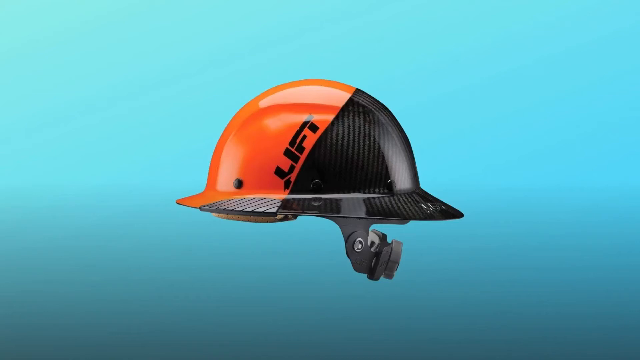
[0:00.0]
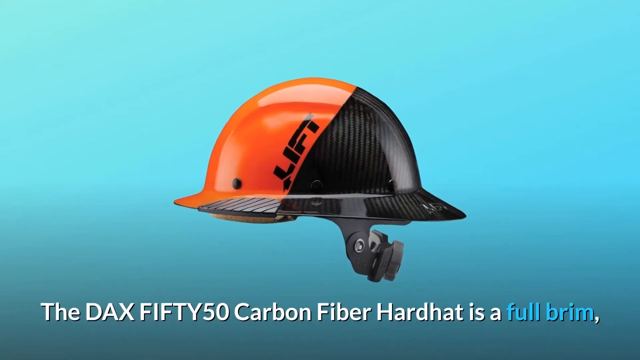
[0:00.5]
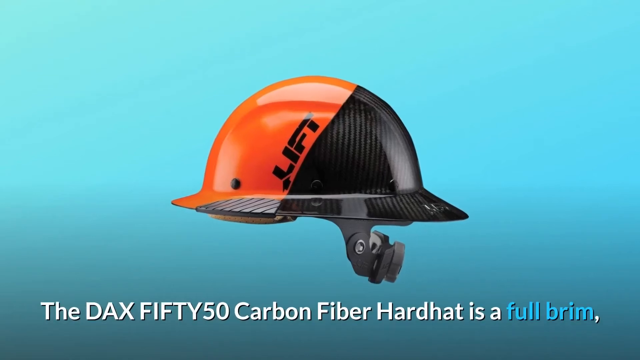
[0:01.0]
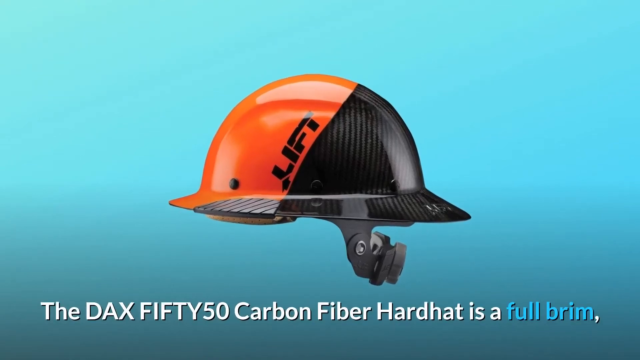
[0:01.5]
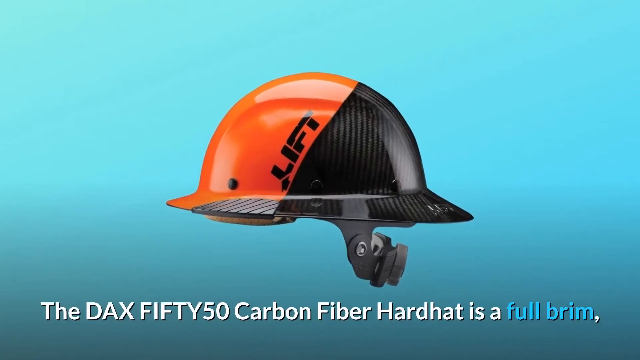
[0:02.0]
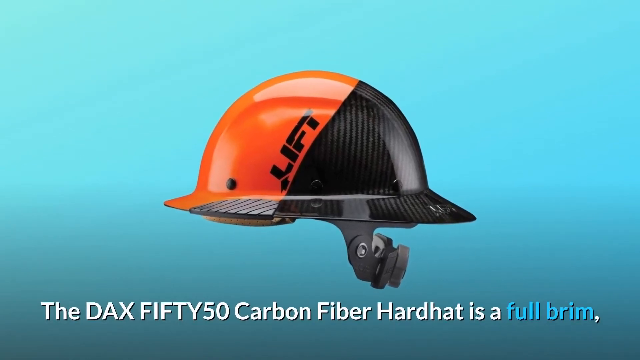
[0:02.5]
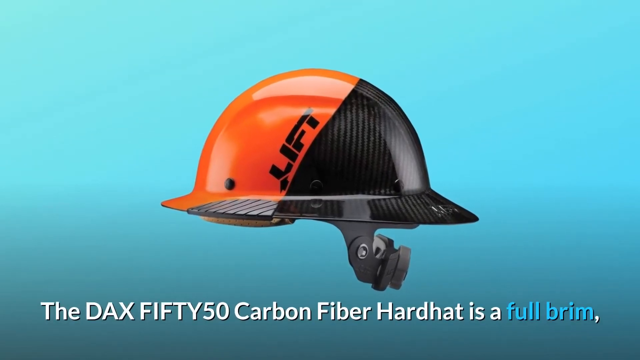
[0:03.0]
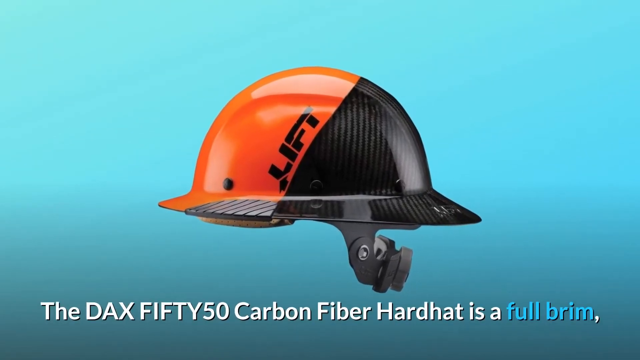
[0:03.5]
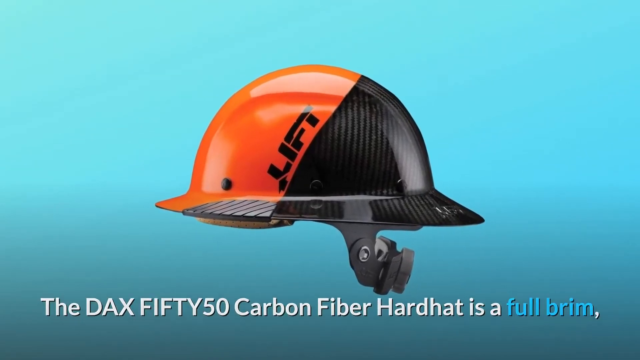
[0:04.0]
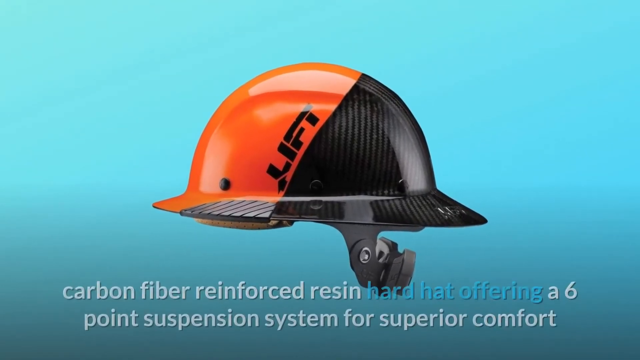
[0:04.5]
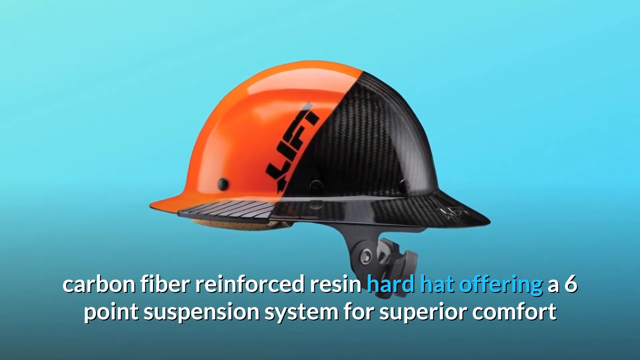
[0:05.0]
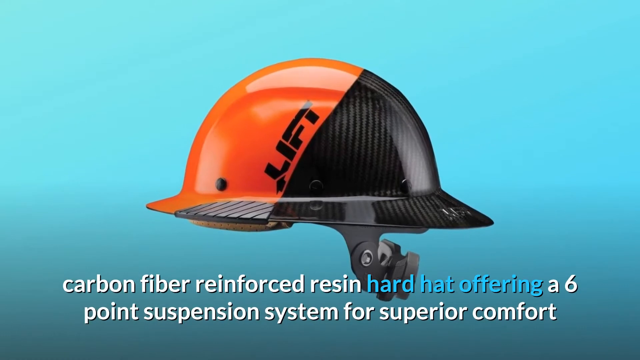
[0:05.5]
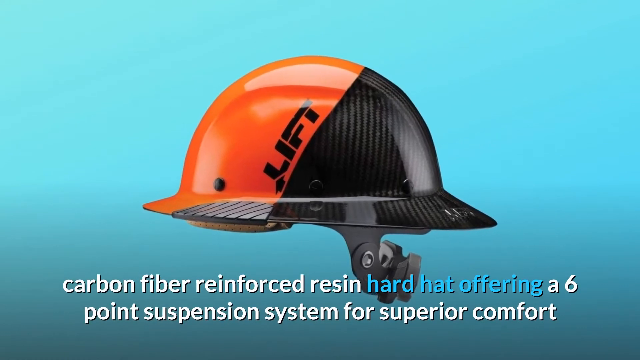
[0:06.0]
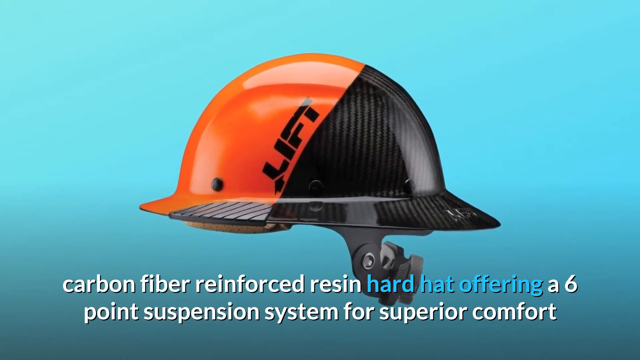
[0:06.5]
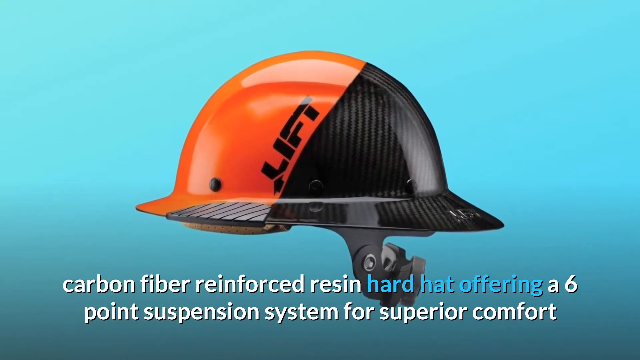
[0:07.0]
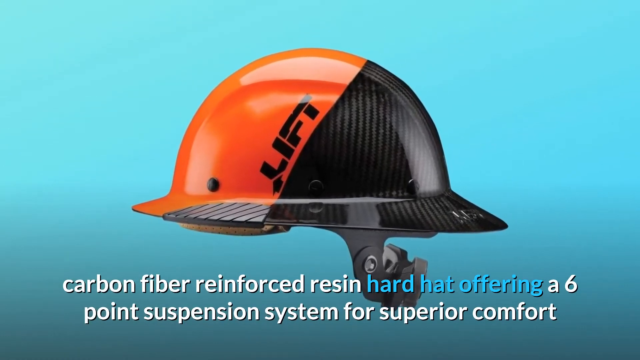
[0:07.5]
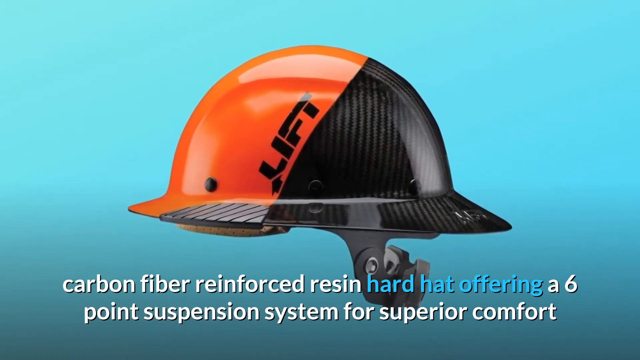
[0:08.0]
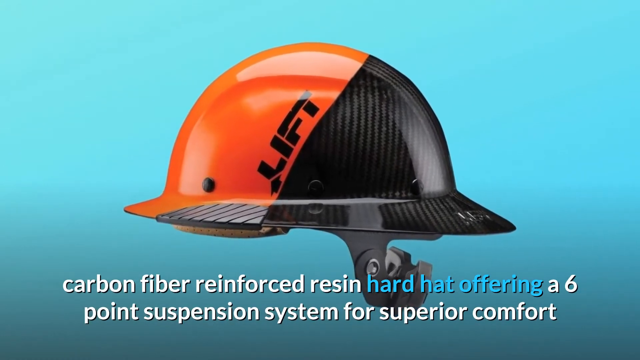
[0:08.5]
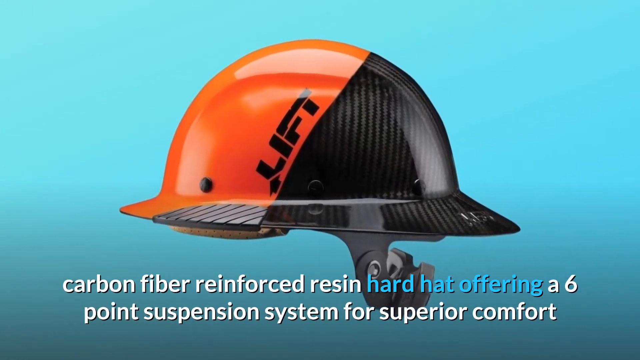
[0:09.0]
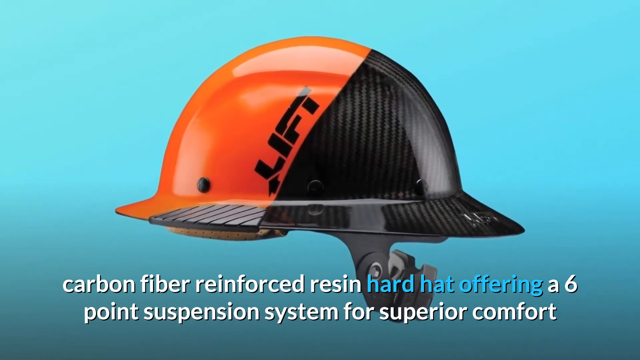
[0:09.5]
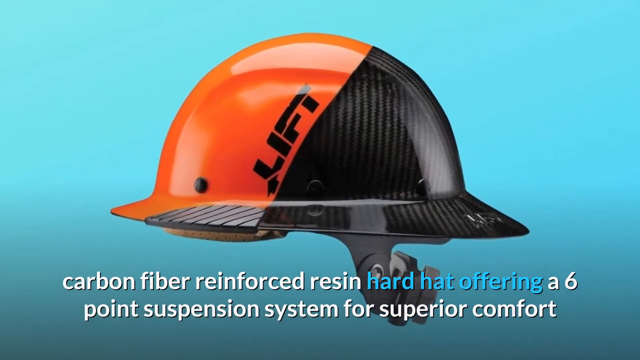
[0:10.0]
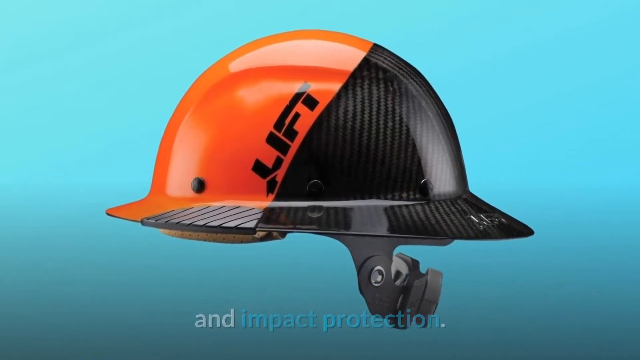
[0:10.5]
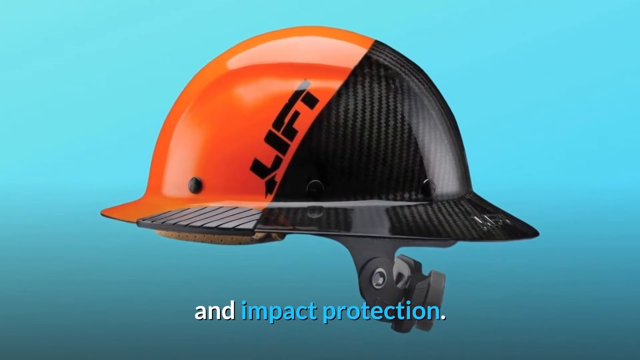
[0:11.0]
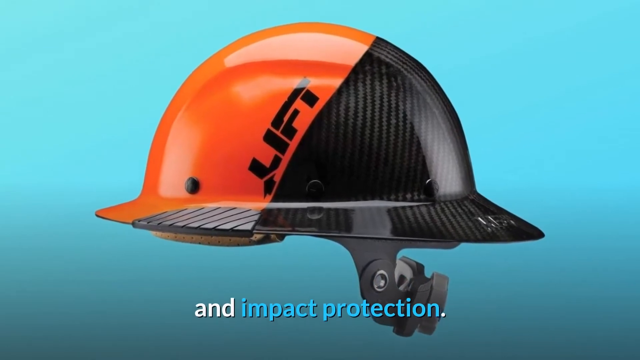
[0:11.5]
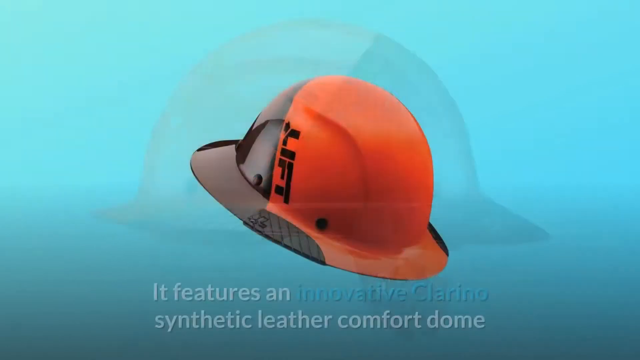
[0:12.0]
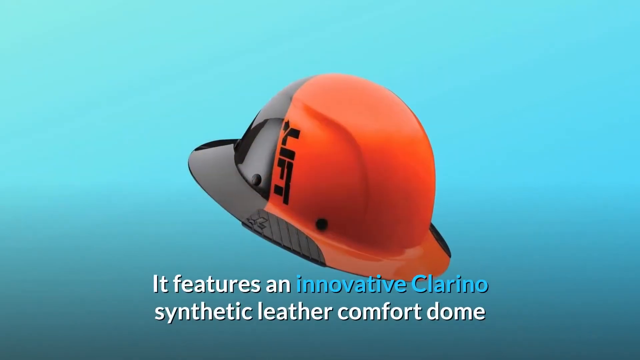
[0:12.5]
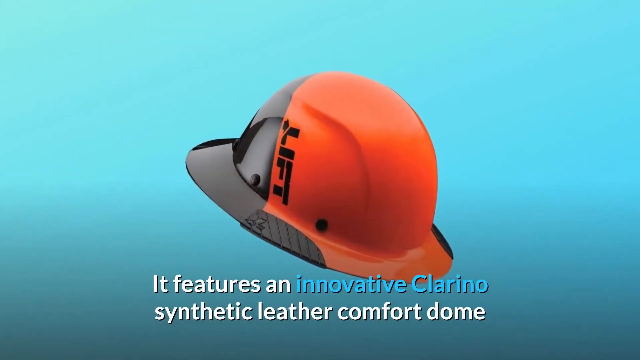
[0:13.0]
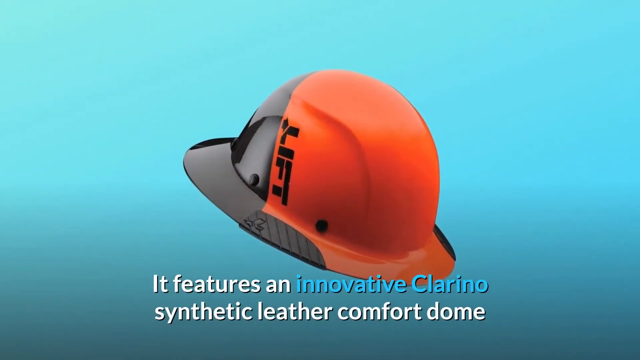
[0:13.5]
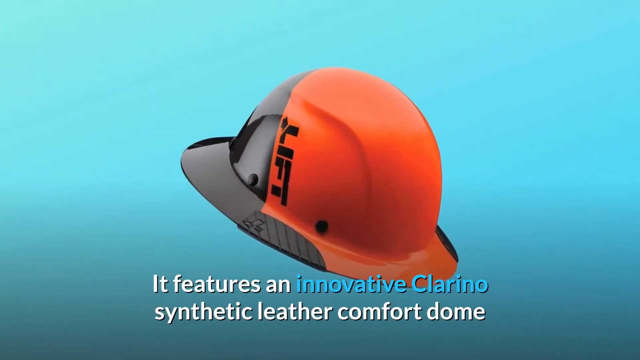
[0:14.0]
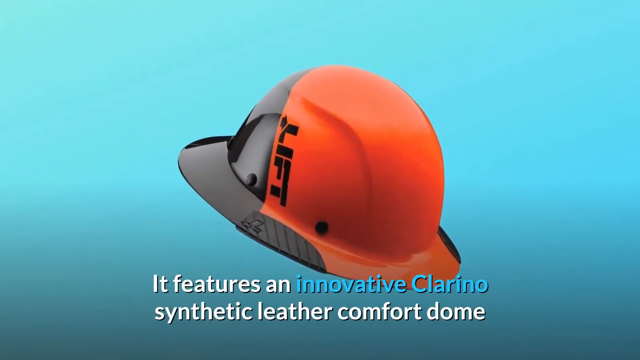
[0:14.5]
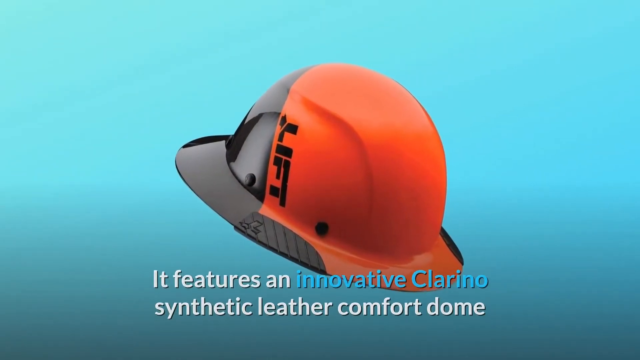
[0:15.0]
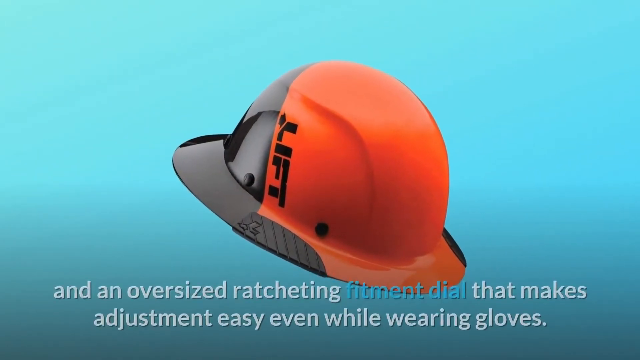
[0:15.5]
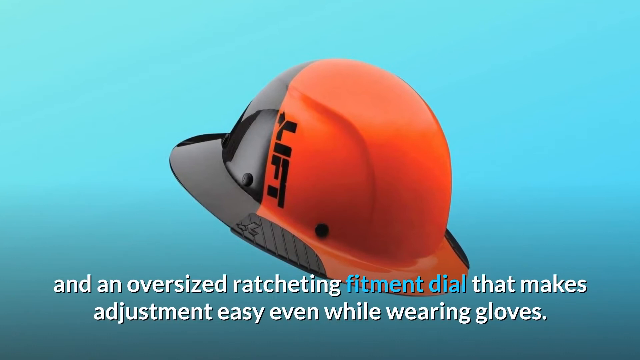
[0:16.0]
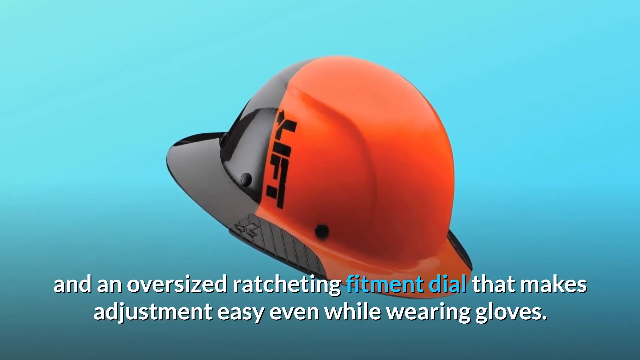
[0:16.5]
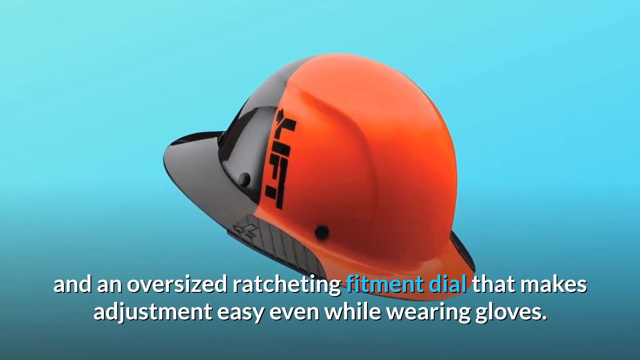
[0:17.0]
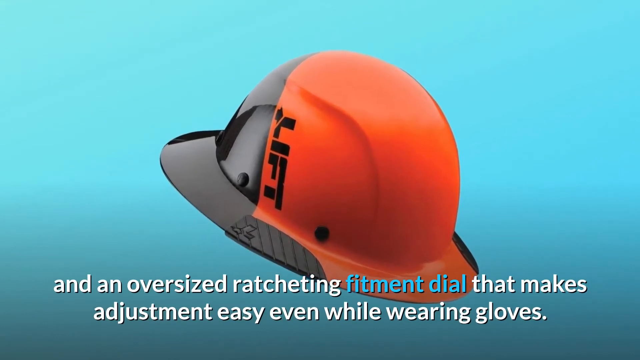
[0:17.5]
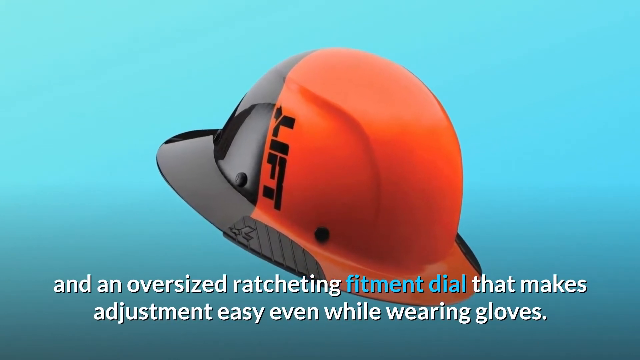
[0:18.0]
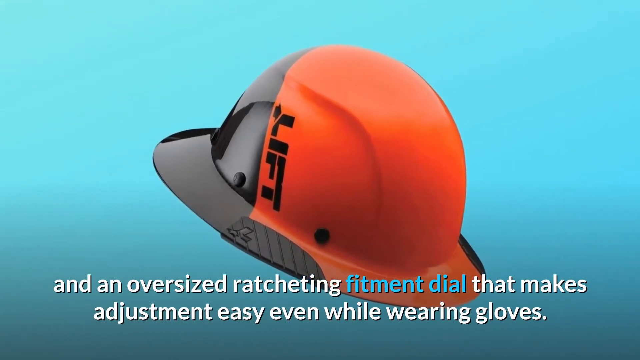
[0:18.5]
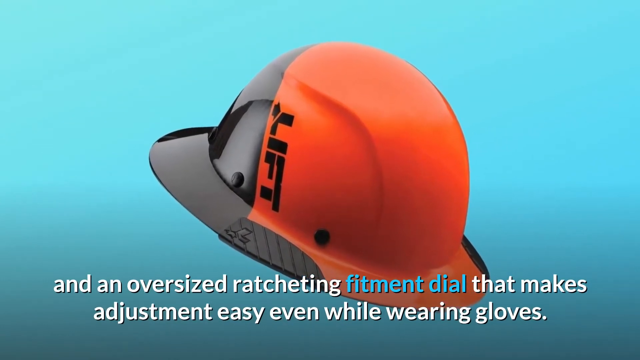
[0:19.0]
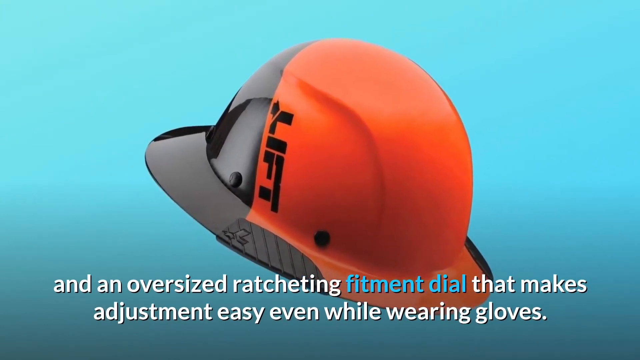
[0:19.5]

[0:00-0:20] An orange and black carbon fiber hard hat is shown on a blue background. Text underneath the hat says "the Dax fifty50 carbon fiber hard hat is a full brim carbon fiber reinforced resin hard hat offering a six point suspension system for the superior comfort and impact protection." The video zooms in on the hat, and then another image of the hat is shown from a different angle. The text on this part of the screen says "it features an innovative Clarino synthetic leather comfort dome and an oversized ratcheting fitment dial that makes adjustment easy while wearing gloves." On the orange side of the hard hat is the brand name "lift," with an arrow underneath the L. The dial on the back of the hat, used to adjust it, is also visible.